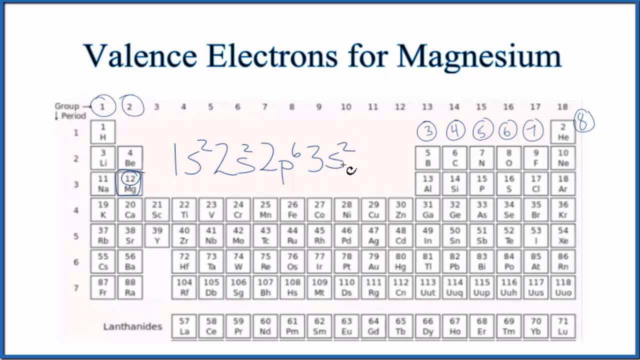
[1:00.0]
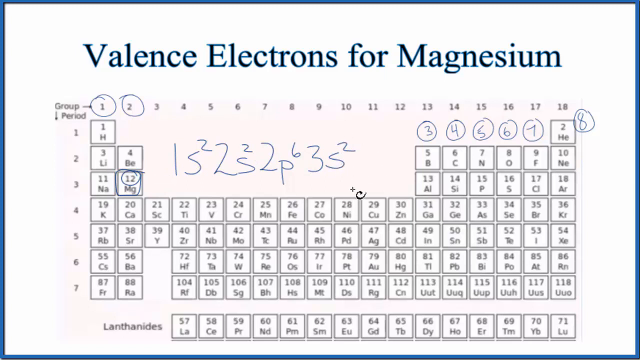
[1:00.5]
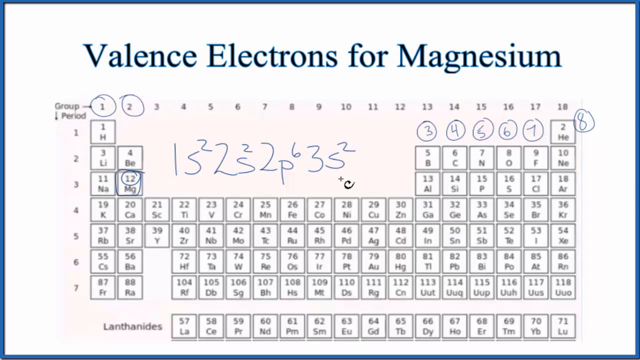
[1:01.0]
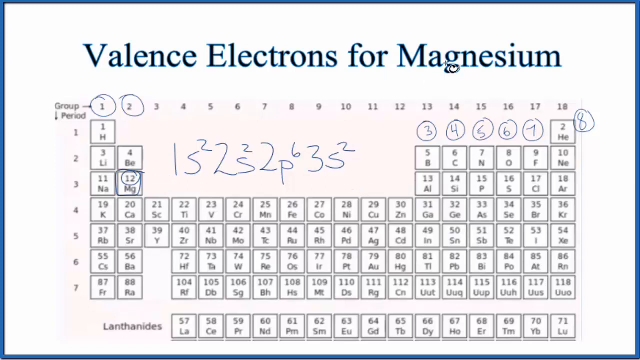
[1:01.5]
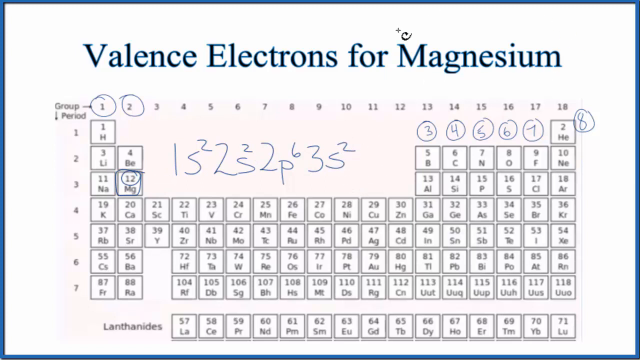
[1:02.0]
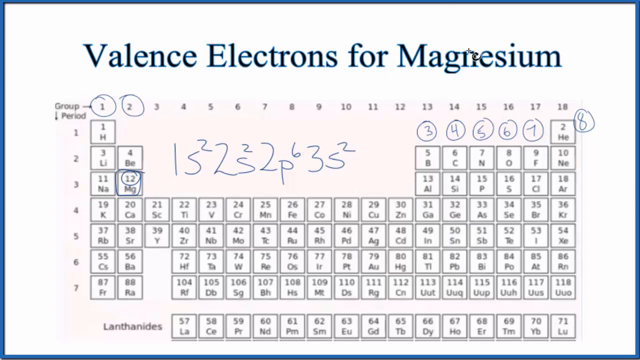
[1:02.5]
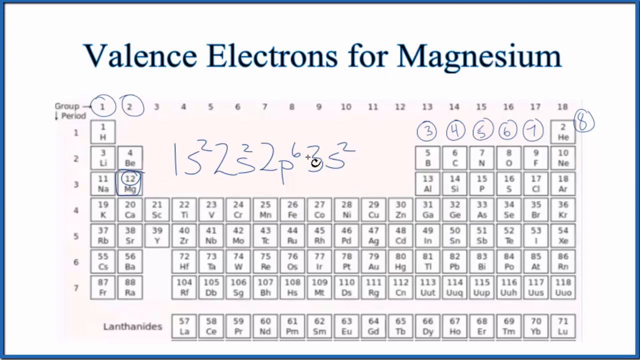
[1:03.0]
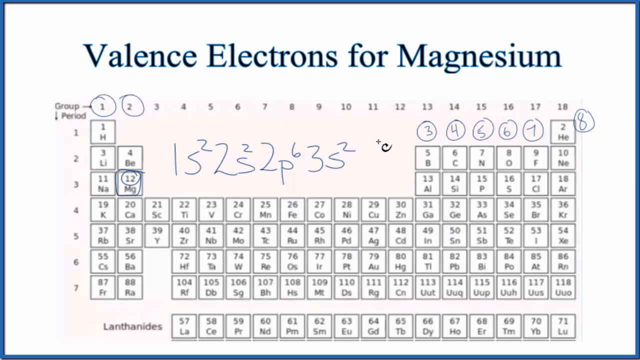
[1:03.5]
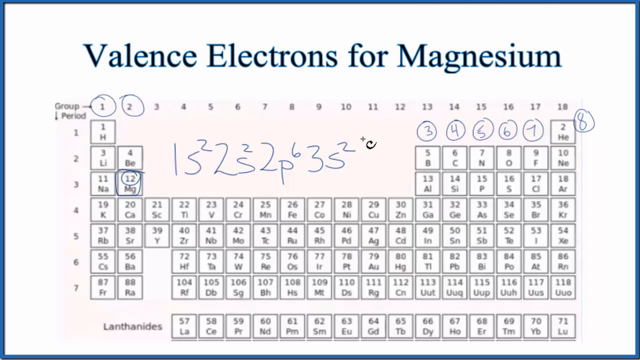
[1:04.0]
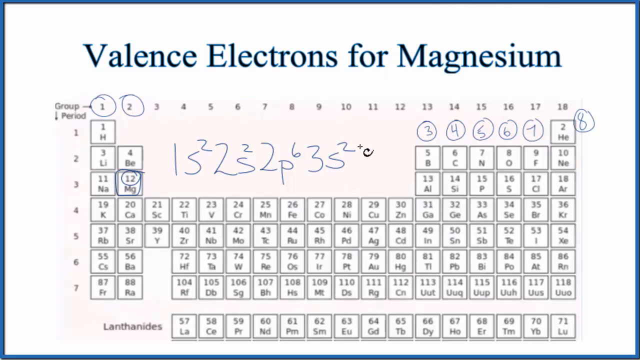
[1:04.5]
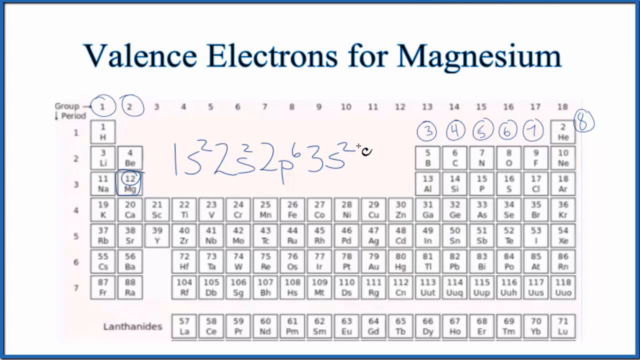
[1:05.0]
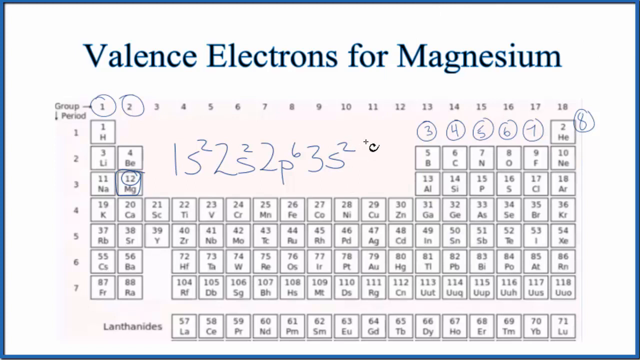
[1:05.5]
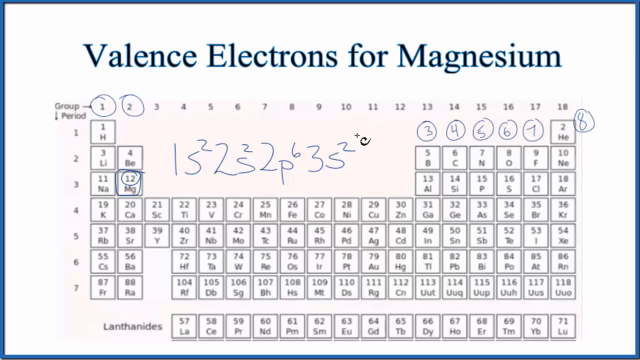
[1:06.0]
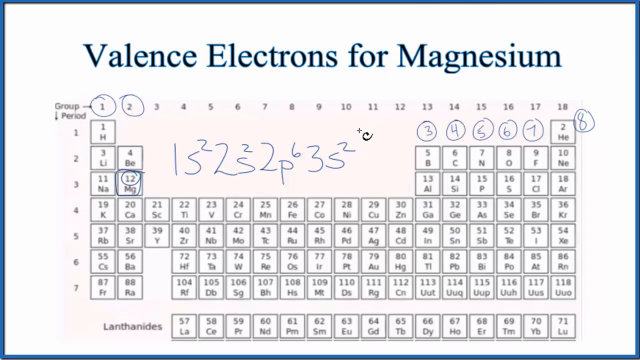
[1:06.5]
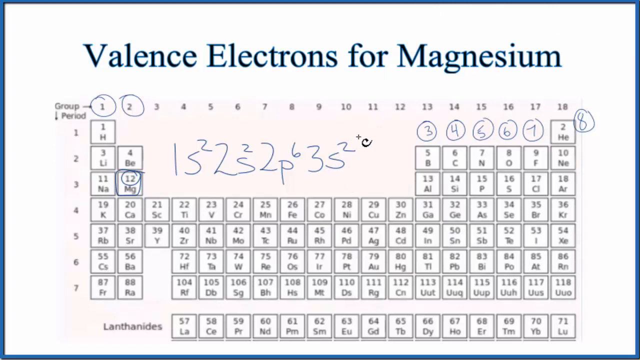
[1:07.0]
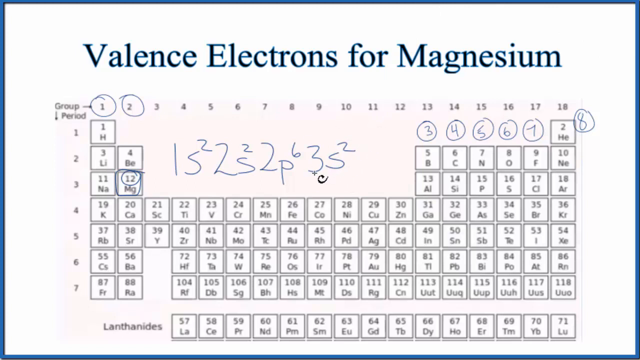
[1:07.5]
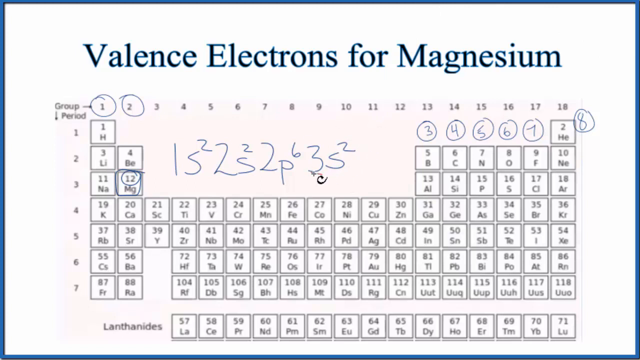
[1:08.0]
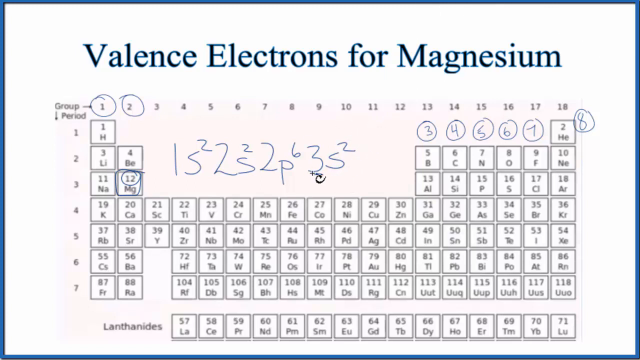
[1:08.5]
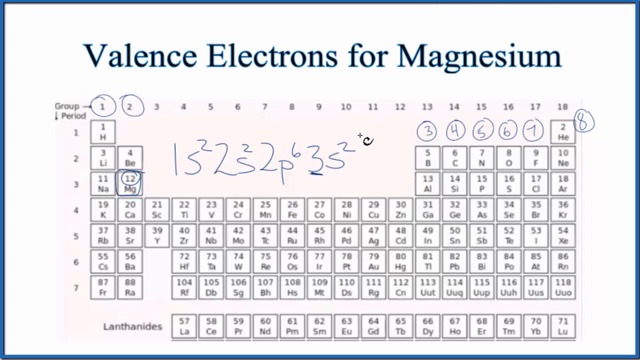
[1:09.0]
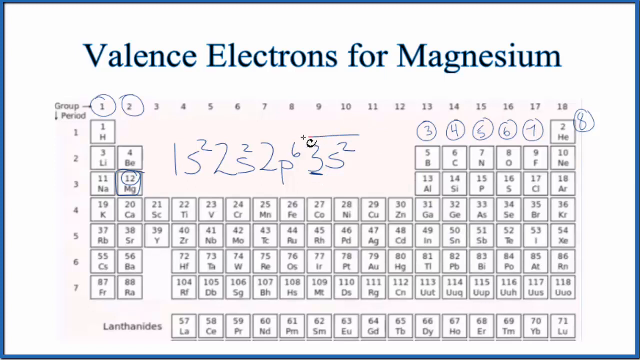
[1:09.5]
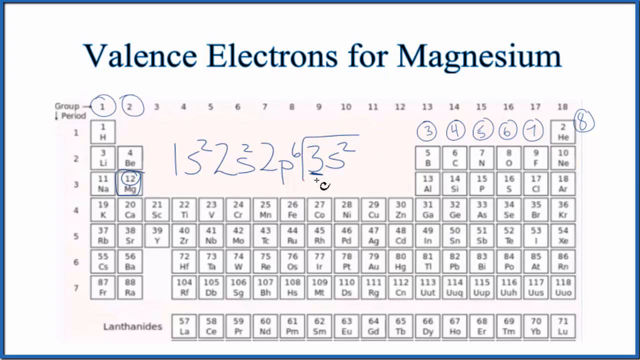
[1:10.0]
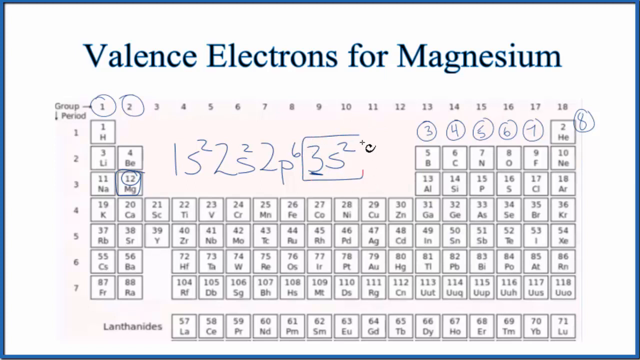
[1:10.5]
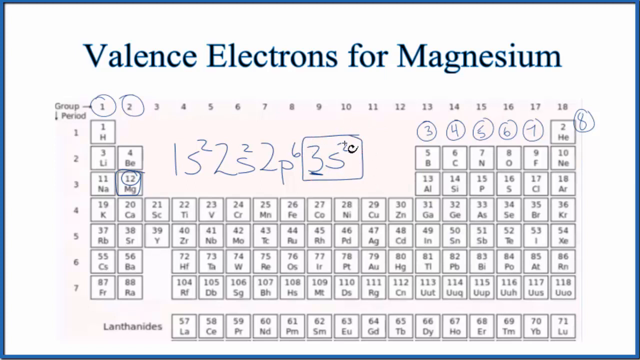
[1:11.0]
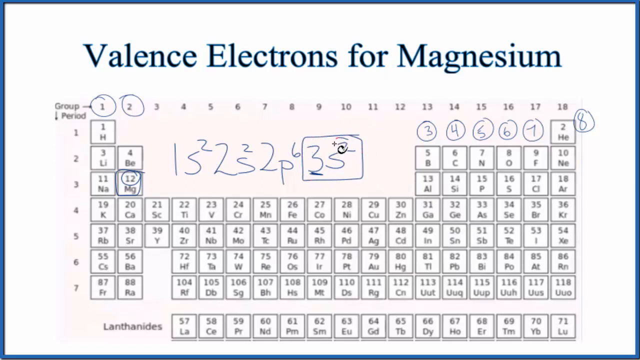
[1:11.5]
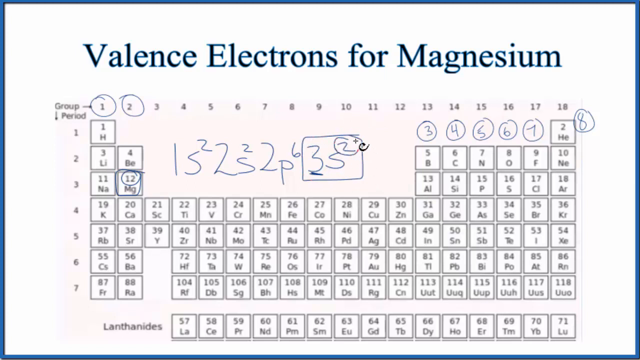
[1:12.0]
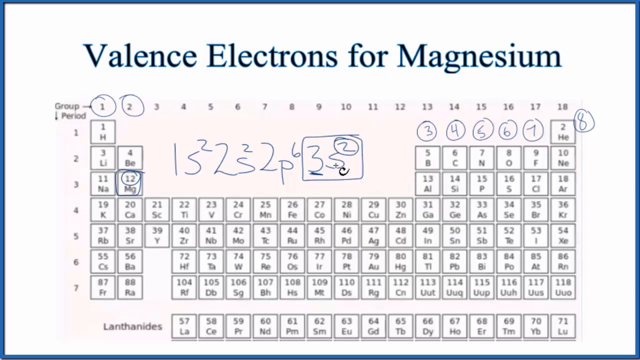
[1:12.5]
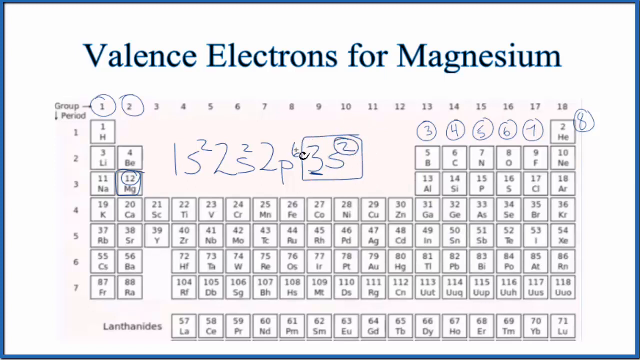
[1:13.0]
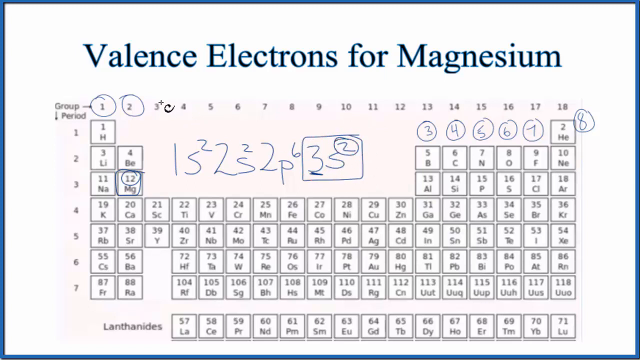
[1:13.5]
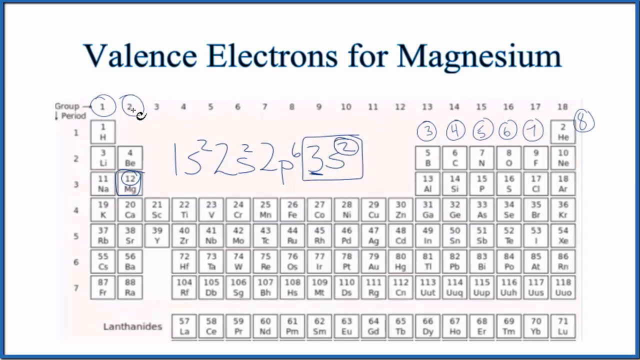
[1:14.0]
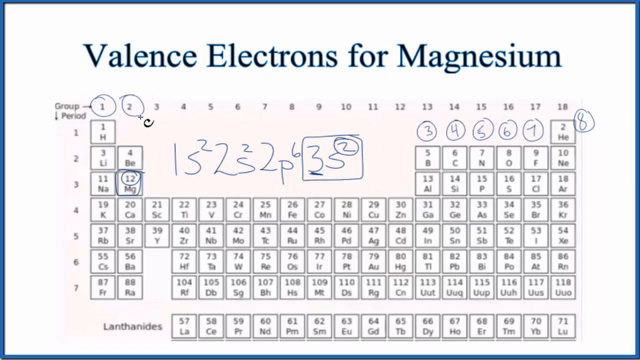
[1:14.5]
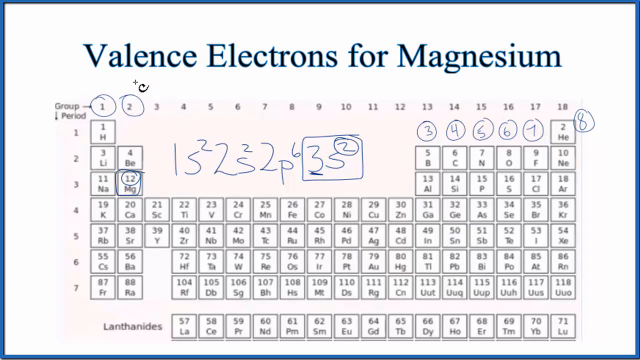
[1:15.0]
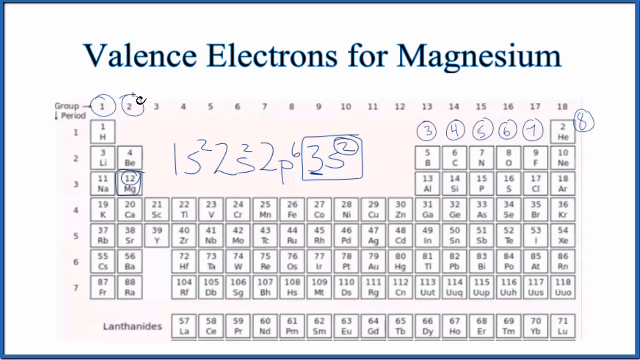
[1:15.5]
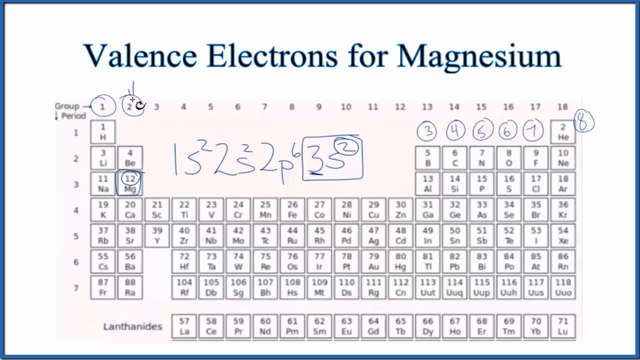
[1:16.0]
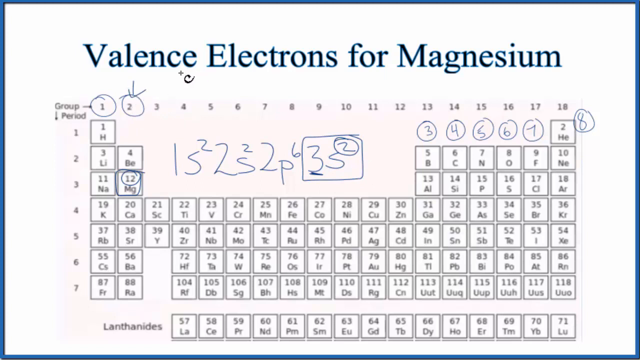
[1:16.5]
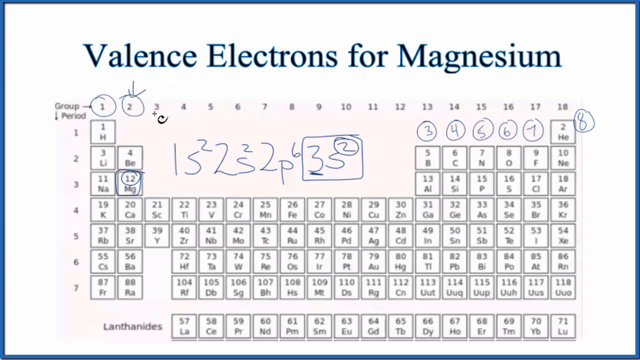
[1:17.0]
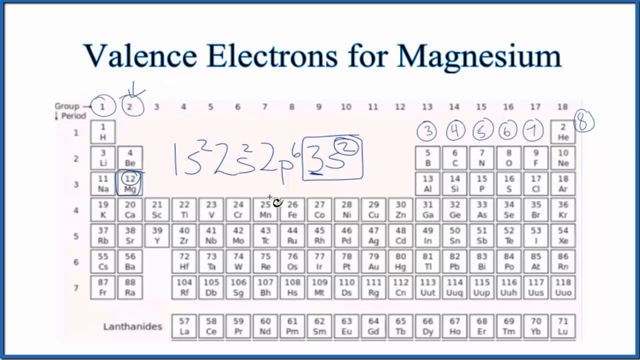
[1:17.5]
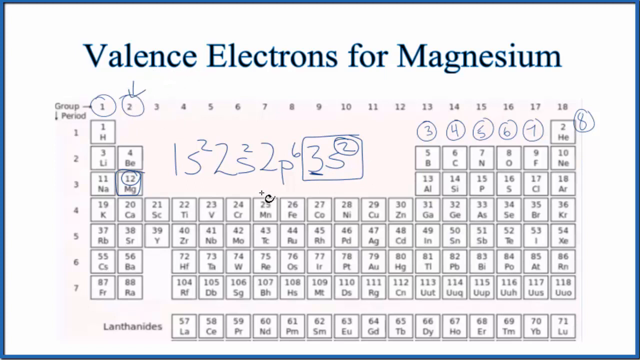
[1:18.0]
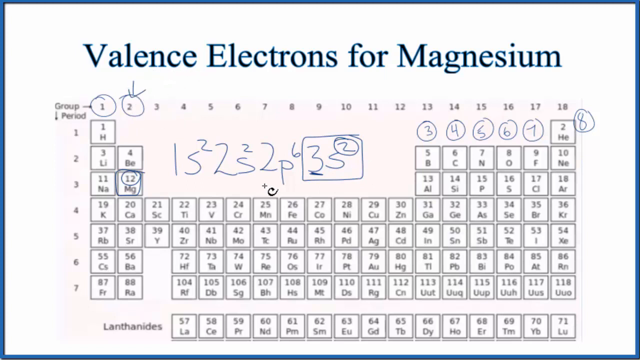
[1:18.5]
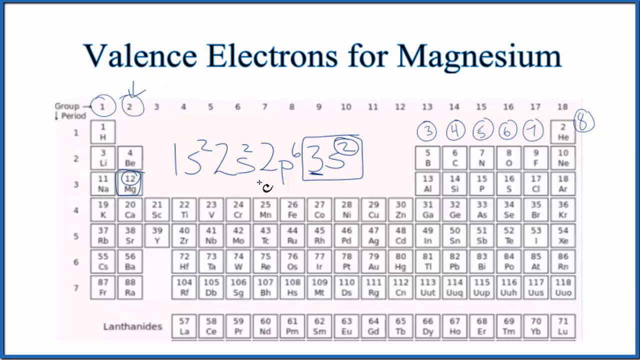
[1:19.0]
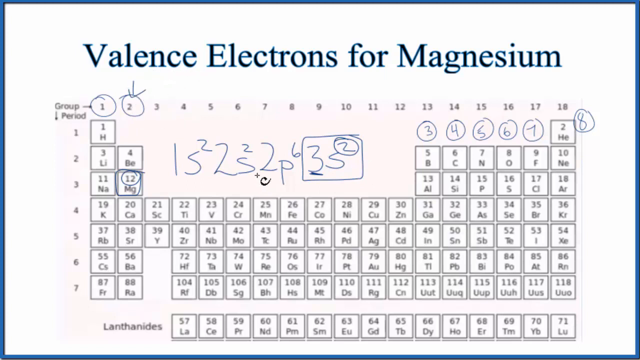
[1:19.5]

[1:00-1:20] A periodic table is on a white background, with "valence electrons for magnesium" at the top. There are many blue notes on the table. The numbers 1 and 2 at the top of the first two columns have blue circles around them, and below columns 13 through 18 are written numbers 3, 4, 5, 6, 7 and 8, each individually circled in blue. The magnesium element's number 12 is circled at the top, and the whole square with 12 at the top and Mg at the bottom is circled too. In the space between columns 2 and 13 across the first, second and third rows, blue writing reads 1s with superscript 2, 2s with superscript 2, 2p with superscript 6, and 3s with superscript 2. A mouse cursor that looks like a plus sign with a C at its bottom right moves around, highlighting and drawing. It first goes up to "magnesium" in the title and makes a counterclockwise circle, then goes to the 3s squared and makes a counterclockwise circle around it too. It draws a blue line under the 3, makes a circle around the 3s squared, and circles the 2 above the s. It then goes back to column two and draws an arrow pointing at the number 2 of that column. It apparently explains where the 2 in 3s2 comes from.